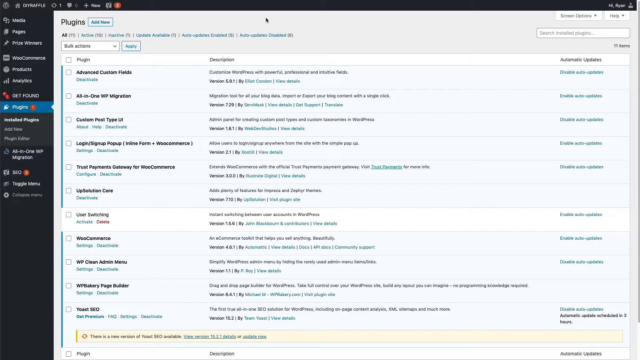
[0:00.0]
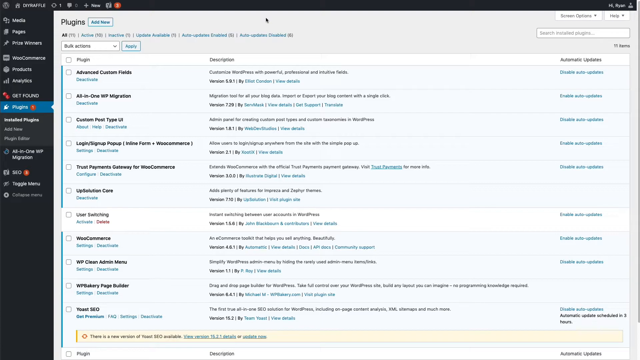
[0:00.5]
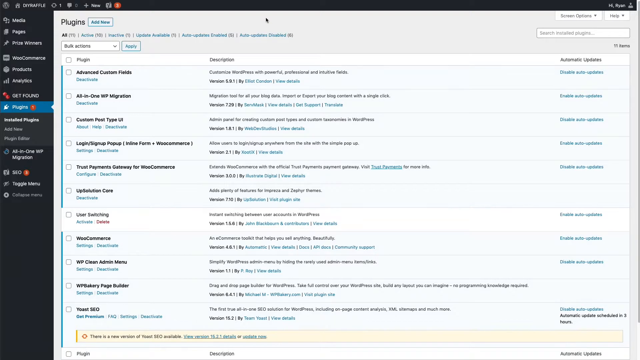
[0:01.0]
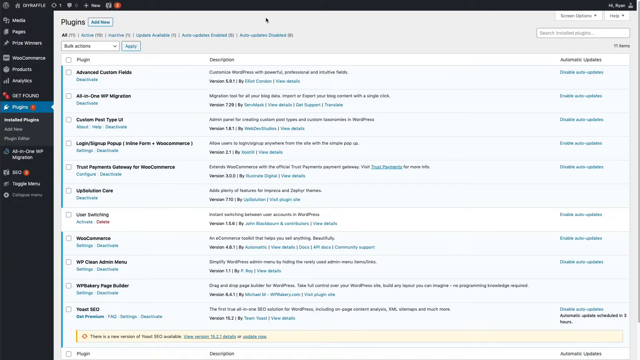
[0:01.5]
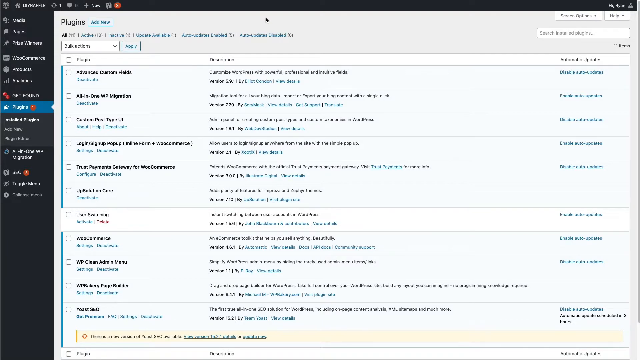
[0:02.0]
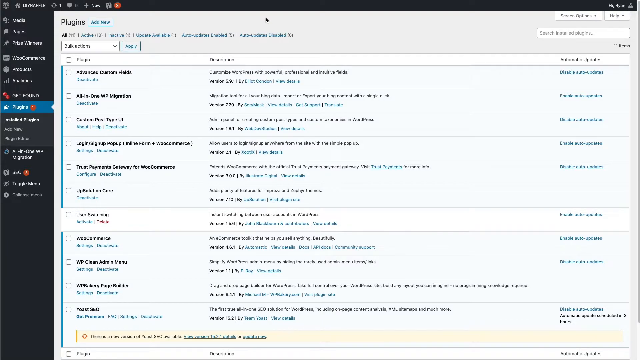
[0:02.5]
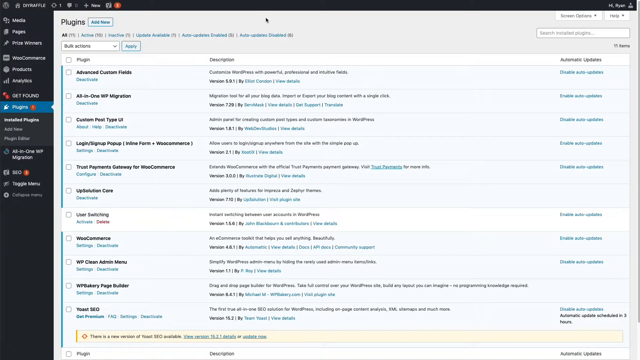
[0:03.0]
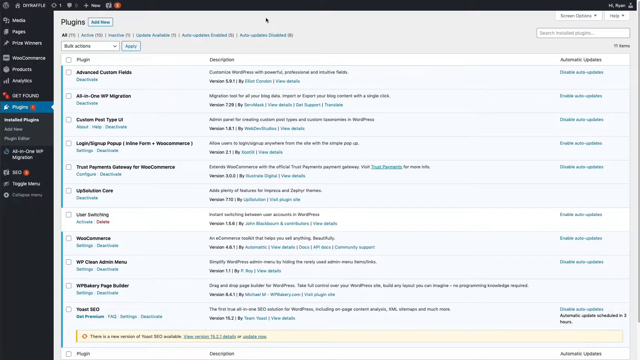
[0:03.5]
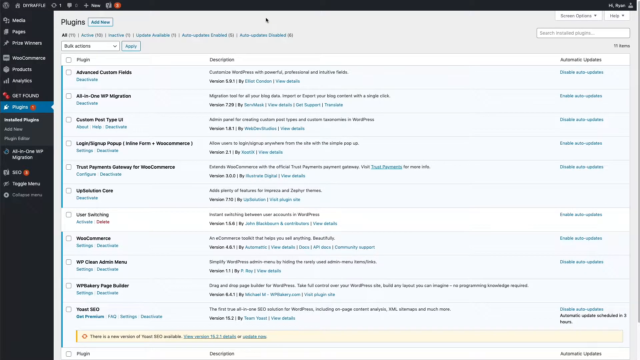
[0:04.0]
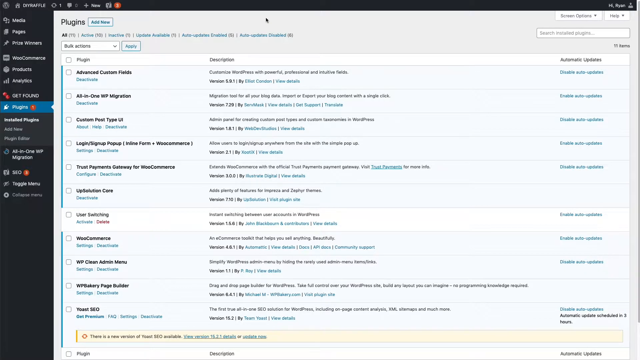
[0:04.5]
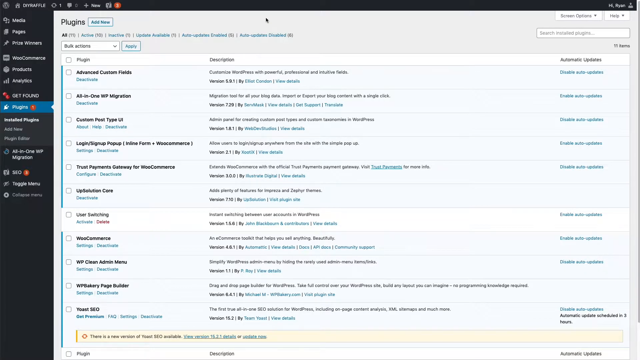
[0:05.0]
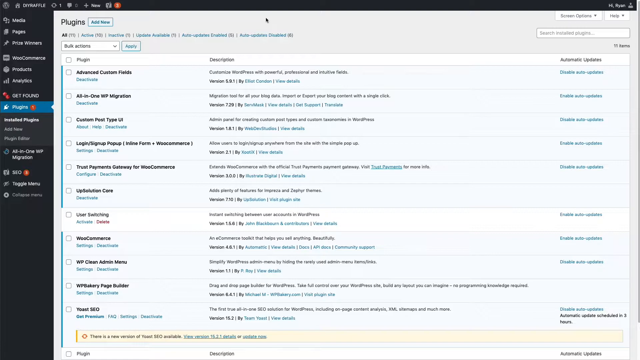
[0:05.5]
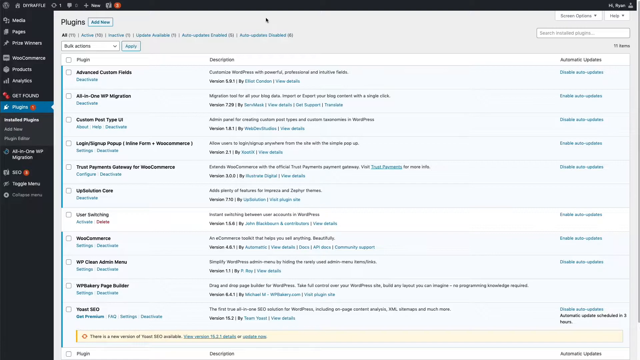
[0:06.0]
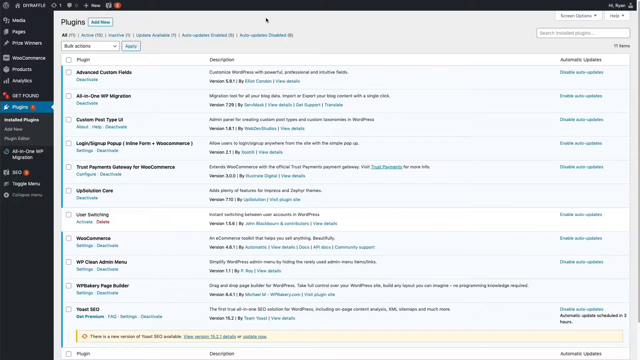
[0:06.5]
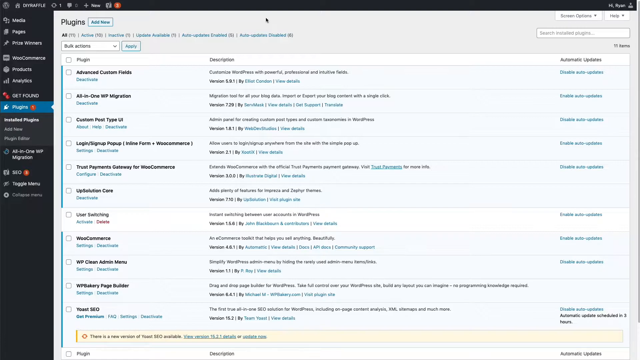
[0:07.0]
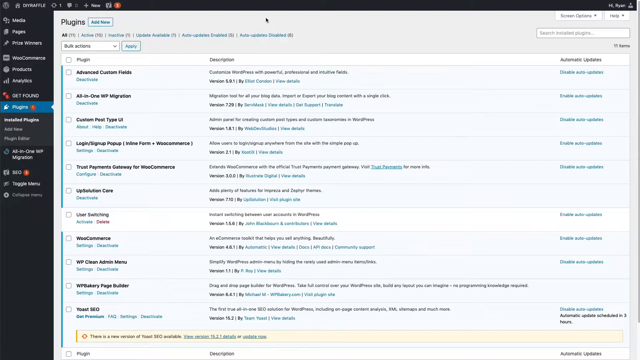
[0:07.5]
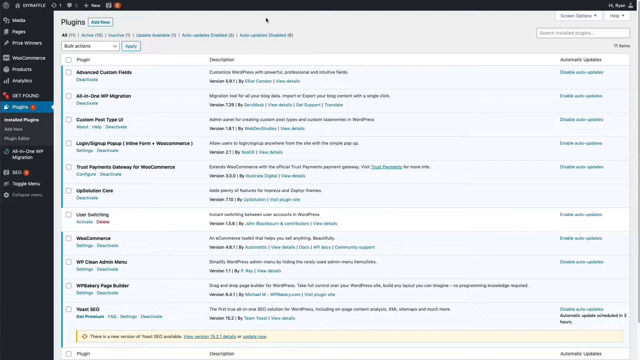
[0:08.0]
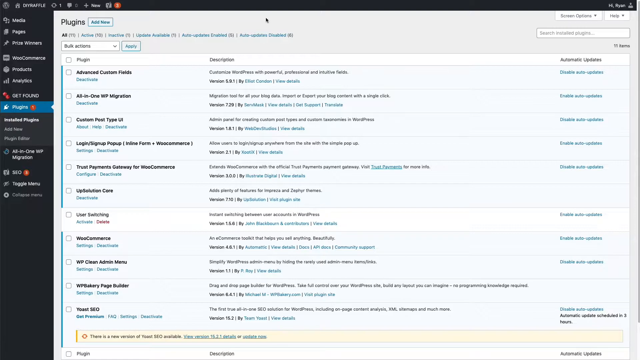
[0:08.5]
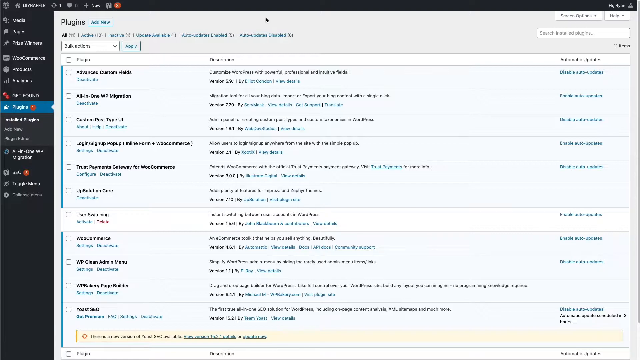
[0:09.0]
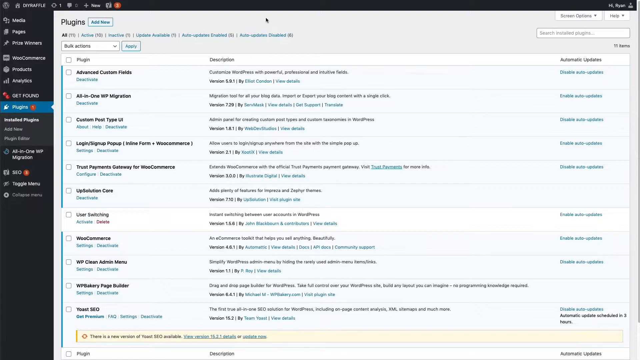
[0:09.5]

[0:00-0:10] Someone appears to be giving a tutorial on viewing the installed plugins on a device. On the far left side there are several menu options, and Plugins has been selected. The active window shows the available options for the device's plugins. A top menu offers options to filter the plugins in the display: active, inactive, or whether automatic updates are enabled or disabled. There is also an option to choose whether actions apply to all plugins, or a box can be checked to perform an action on individual plugins.